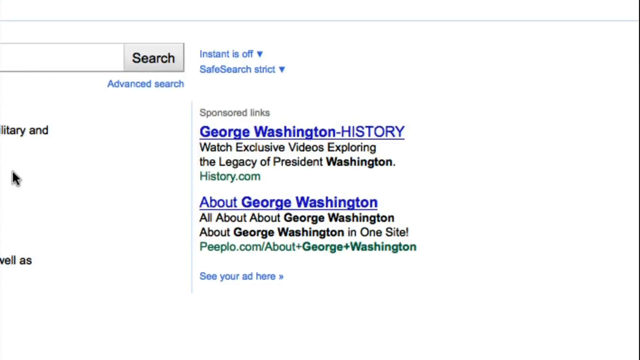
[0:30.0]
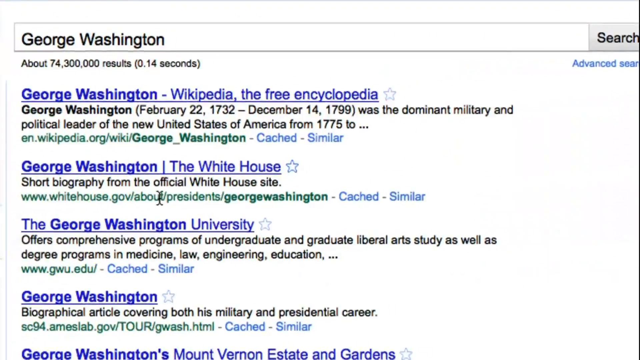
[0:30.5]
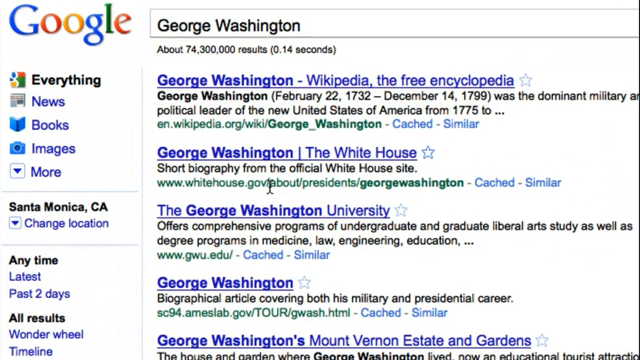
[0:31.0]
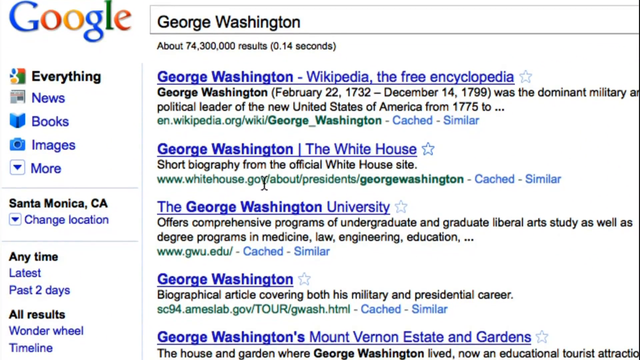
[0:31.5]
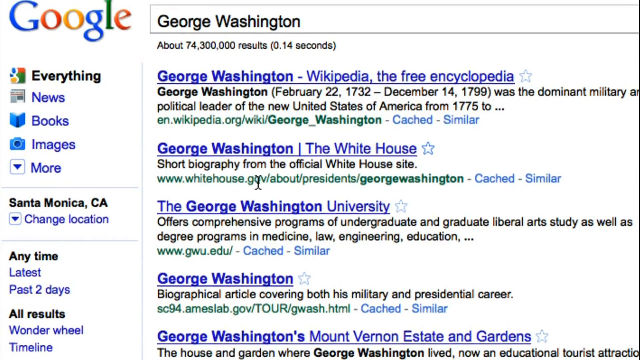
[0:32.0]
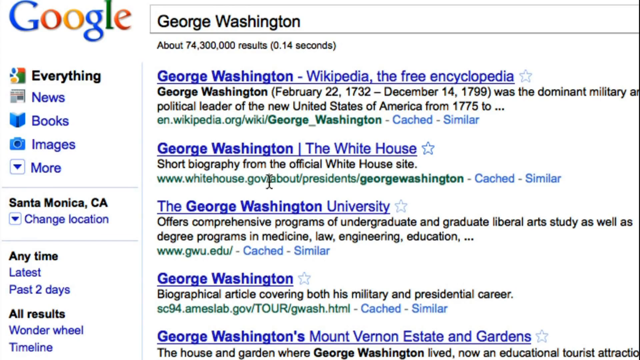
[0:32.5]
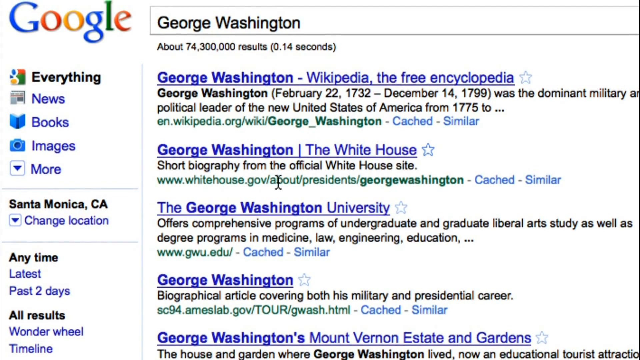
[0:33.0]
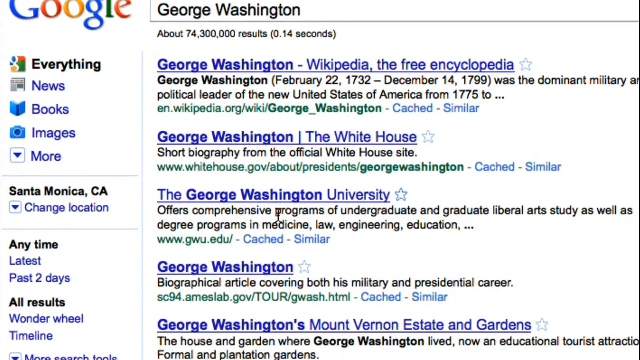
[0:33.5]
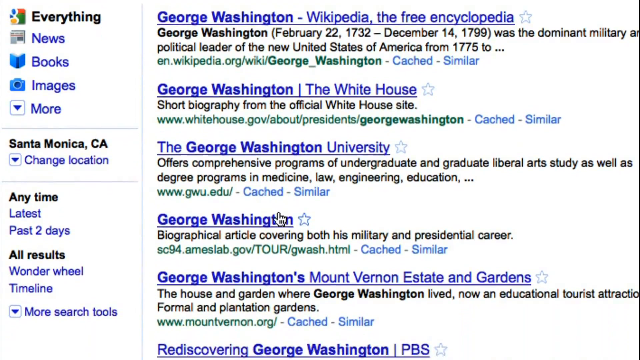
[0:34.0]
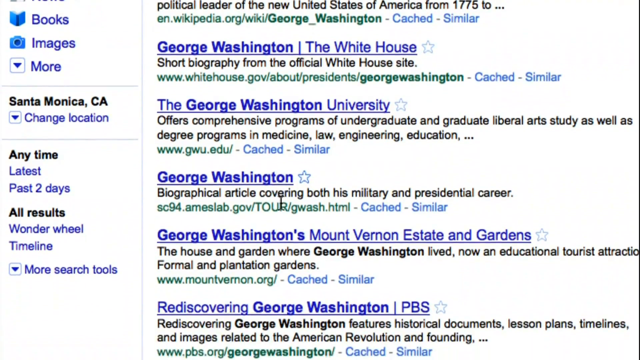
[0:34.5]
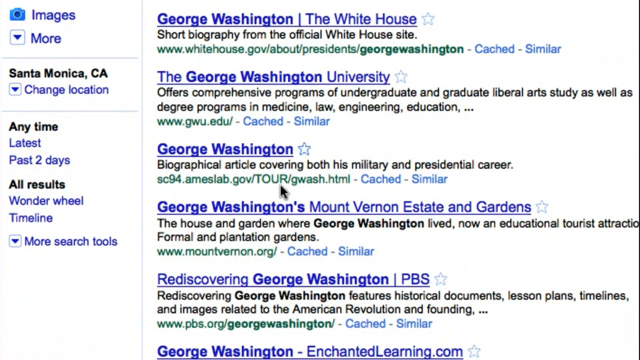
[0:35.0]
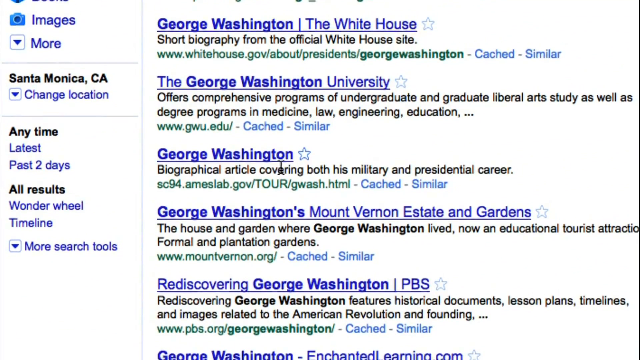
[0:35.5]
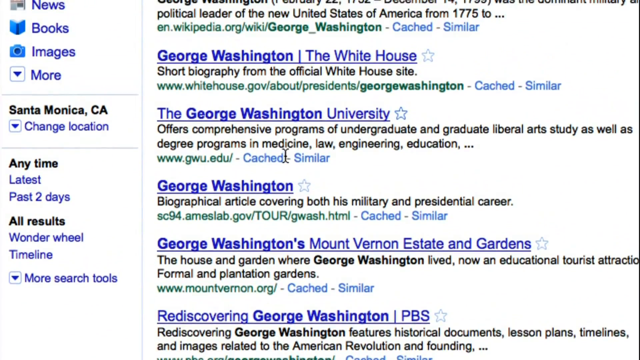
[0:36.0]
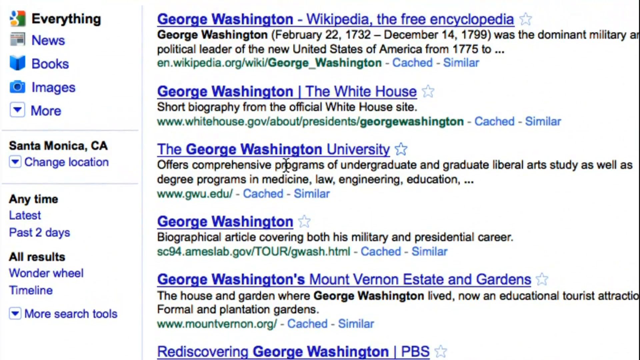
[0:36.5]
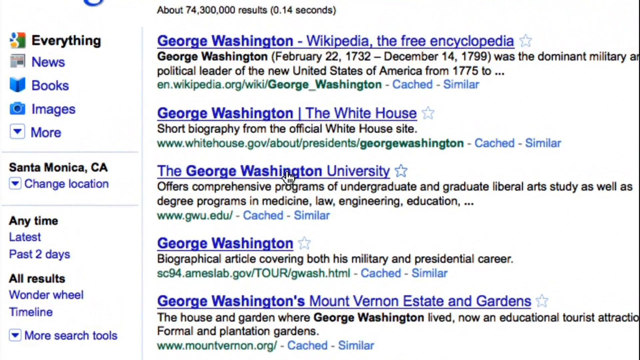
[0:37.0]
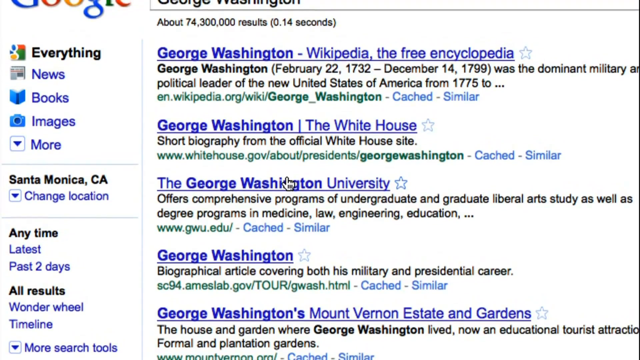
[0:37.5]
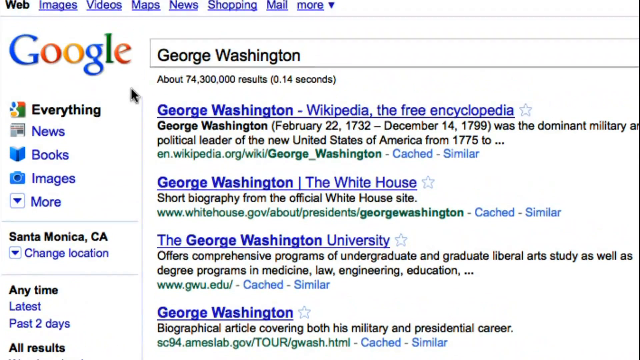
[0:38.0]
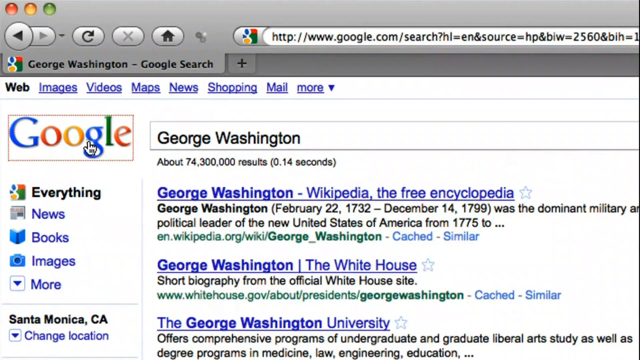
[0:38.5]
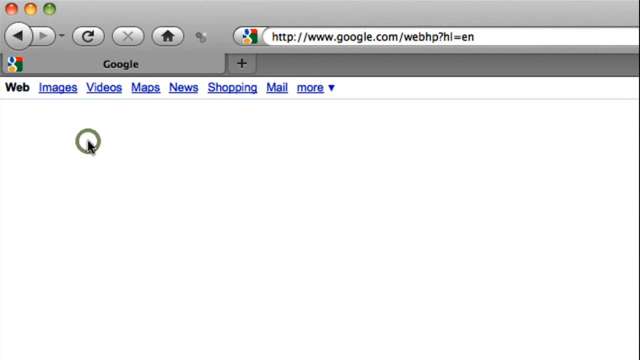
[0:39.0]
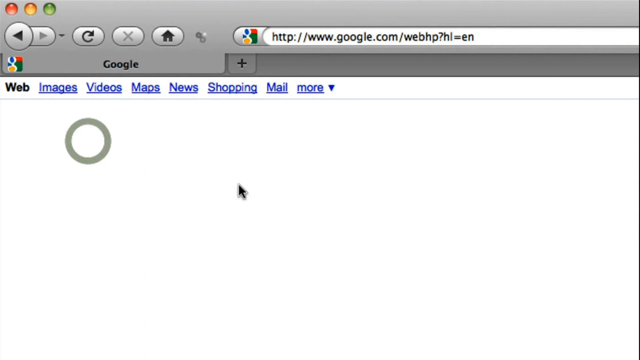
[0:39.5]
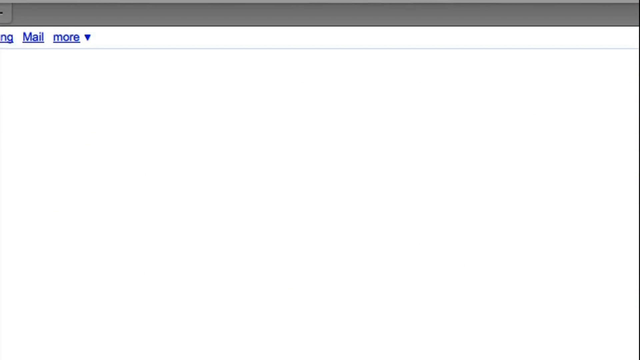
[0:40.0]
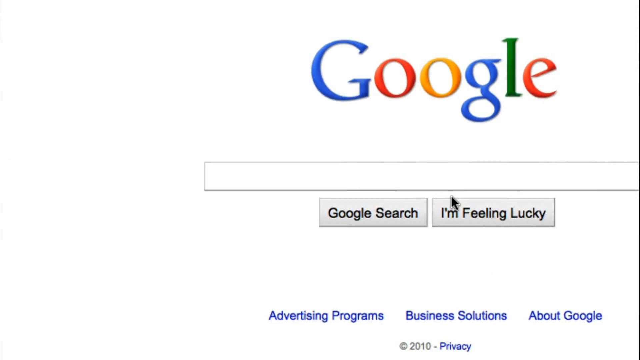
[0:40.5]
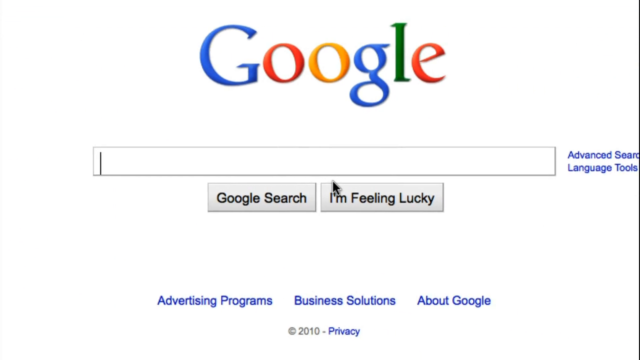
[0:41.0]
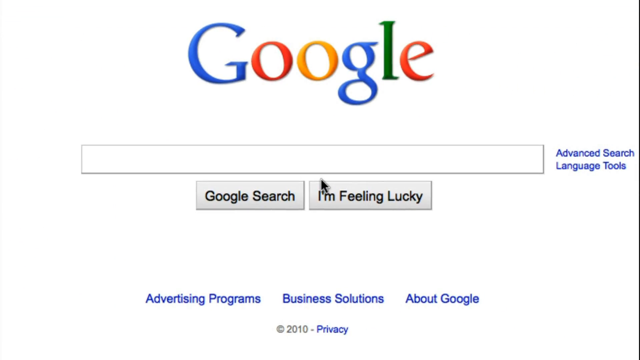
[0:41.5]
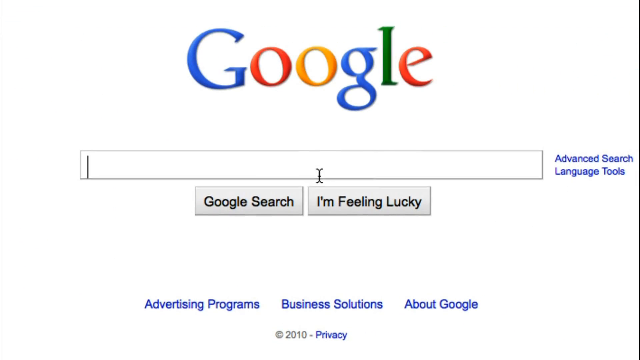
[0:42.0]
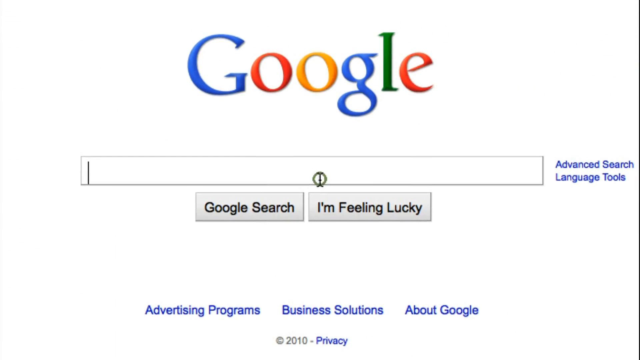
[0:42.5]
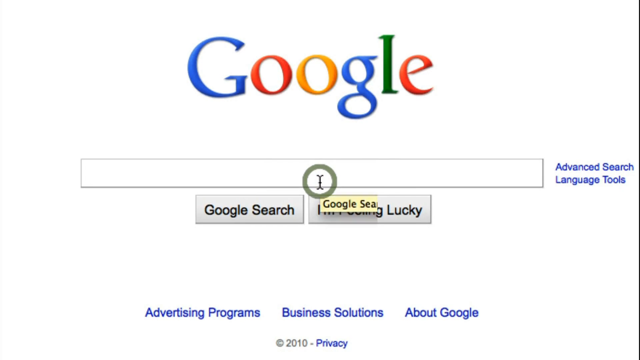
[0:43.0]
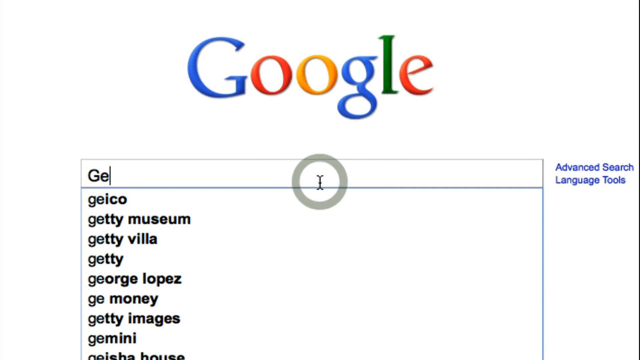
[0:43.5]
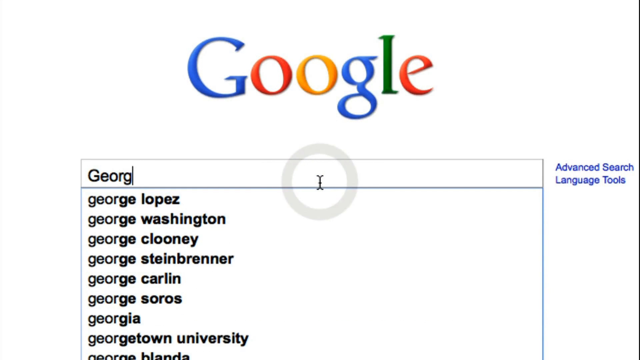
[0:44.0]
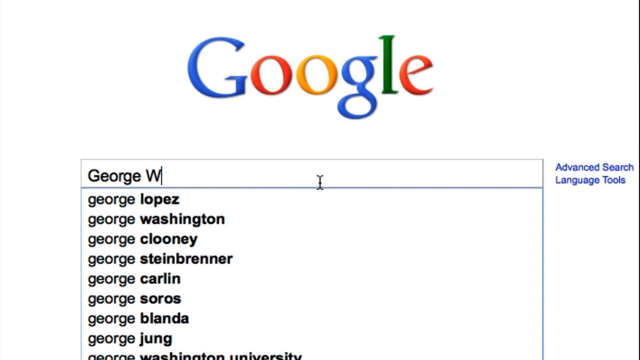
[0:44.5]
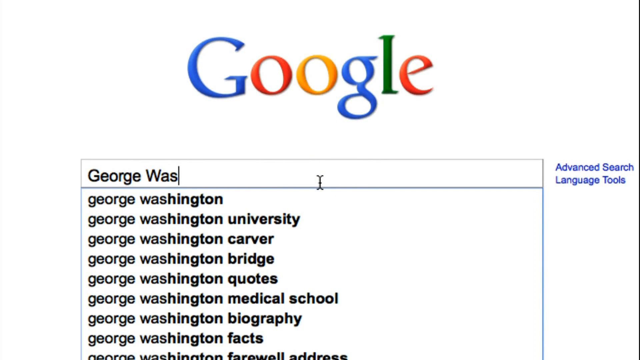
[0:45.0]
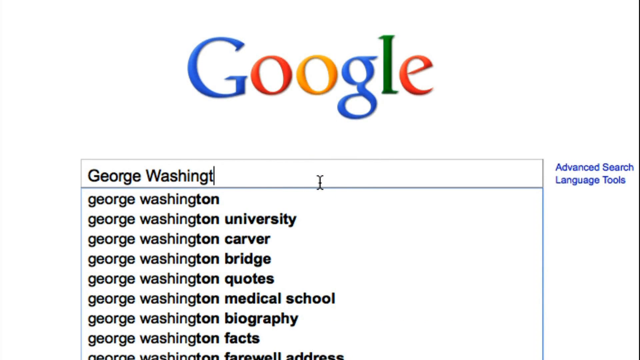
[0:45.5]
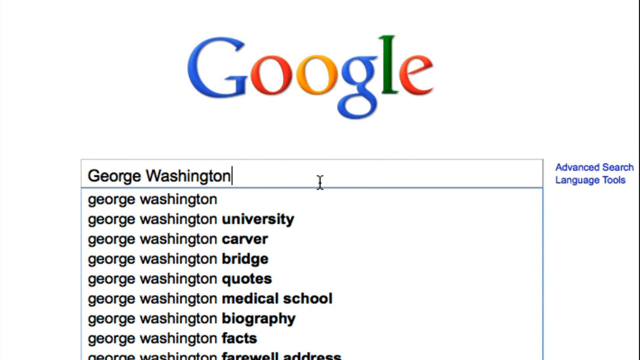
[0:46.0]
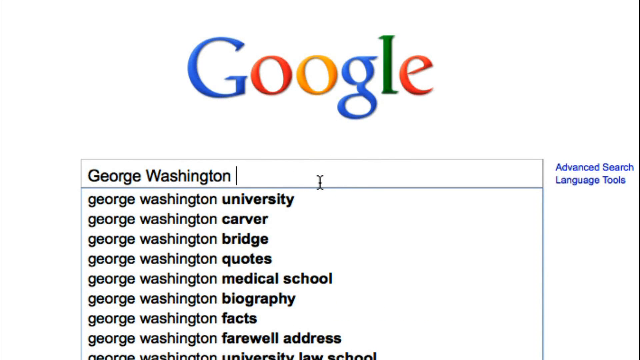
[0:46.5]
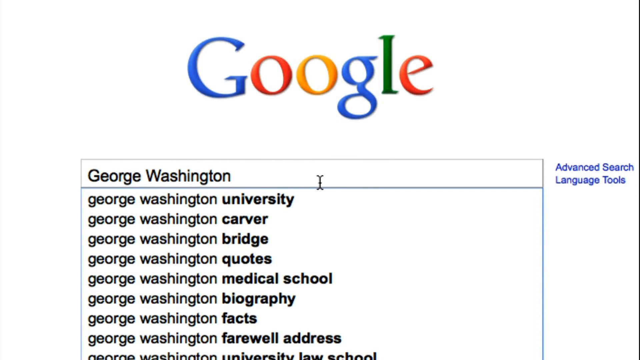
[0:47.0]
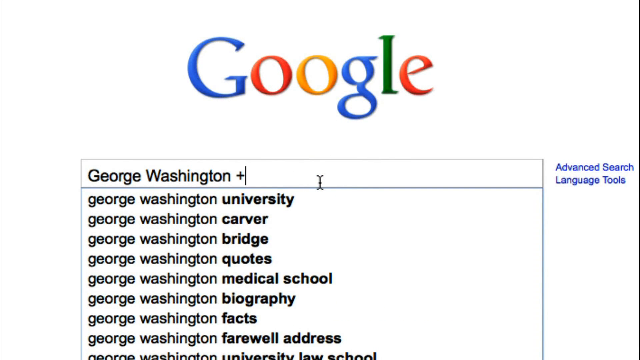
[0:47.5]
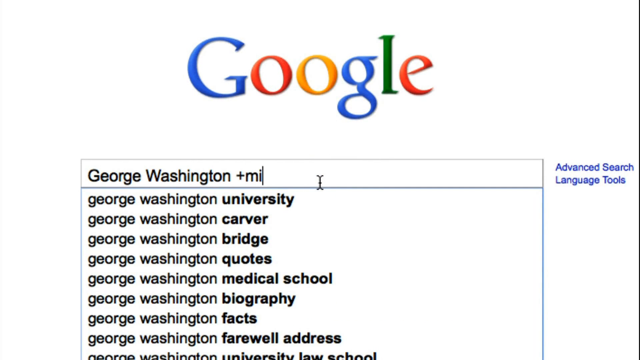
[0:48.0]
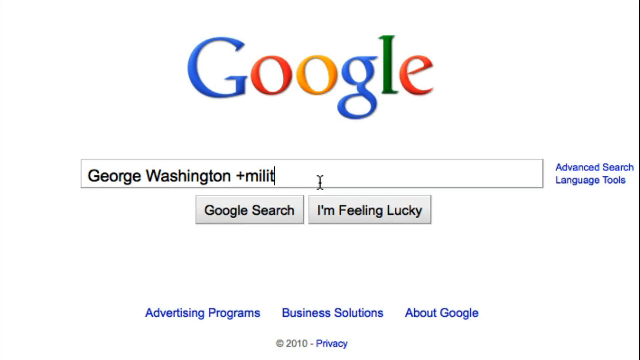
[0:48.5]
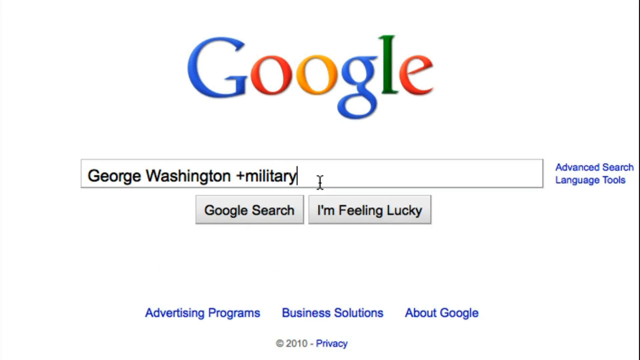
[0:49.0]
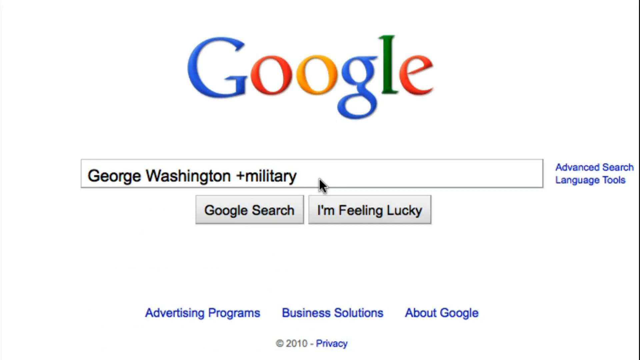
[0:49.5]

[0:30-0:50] The screen of a desktop computer displays a Google search results page for a search on George Washington, with the various results listed. The mouse cursor hovers over the second result, titled "George Washington, the White House," then scrolls down over about three to four results and back up again. The cursor clicks on the colorful Google logo to begin another search, and the Google page with an empty search box pops up. The search phrase "George Washington +military" is typed into the box, which shows a list of autocomplete suggestions related to the phrase. The results page then loads, displaying search results for George Washington that include military references.